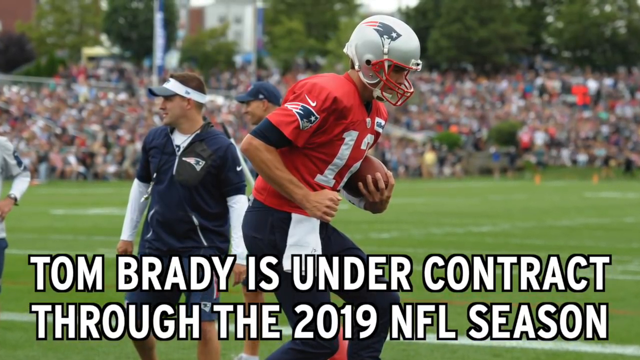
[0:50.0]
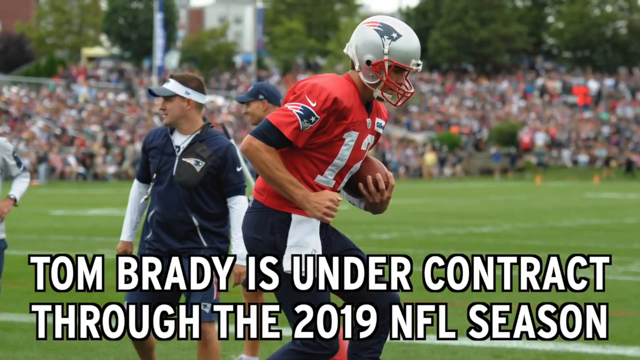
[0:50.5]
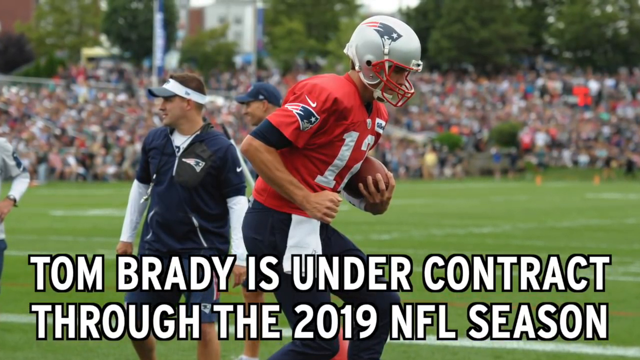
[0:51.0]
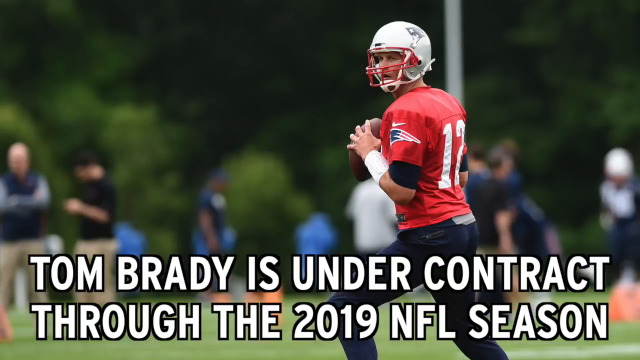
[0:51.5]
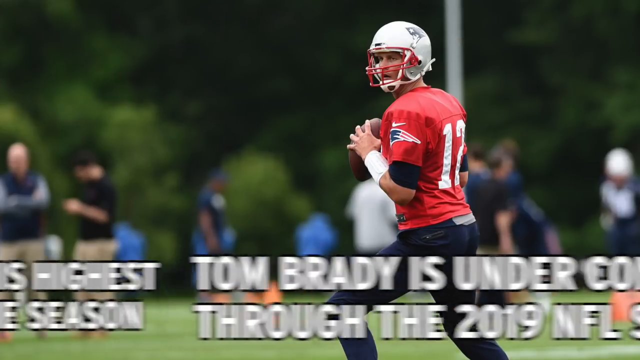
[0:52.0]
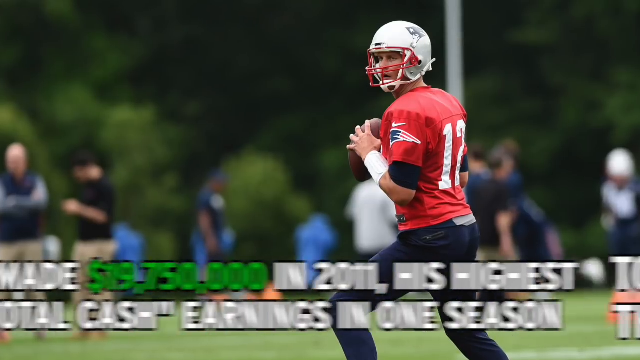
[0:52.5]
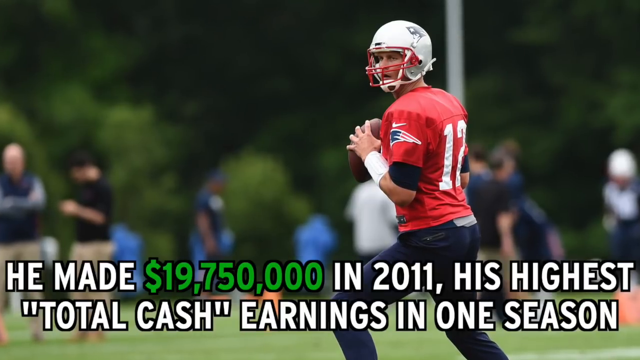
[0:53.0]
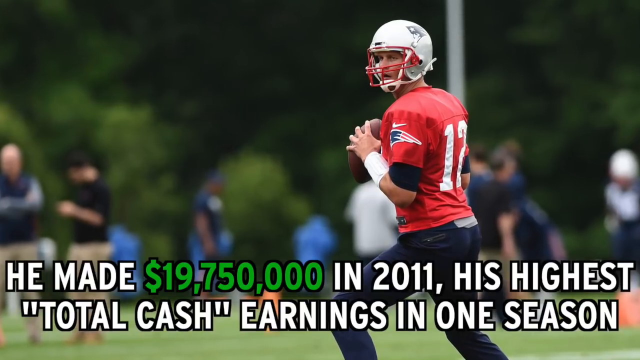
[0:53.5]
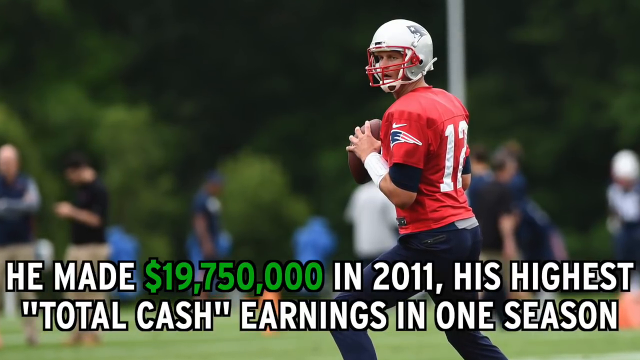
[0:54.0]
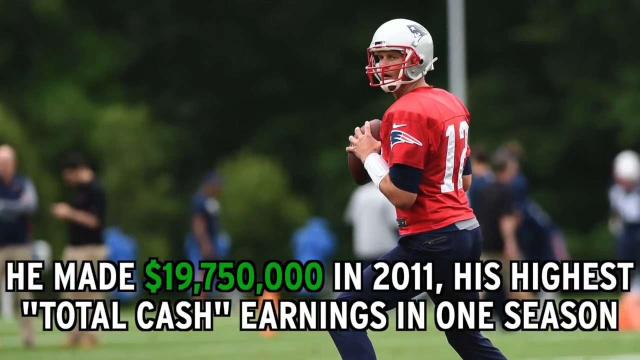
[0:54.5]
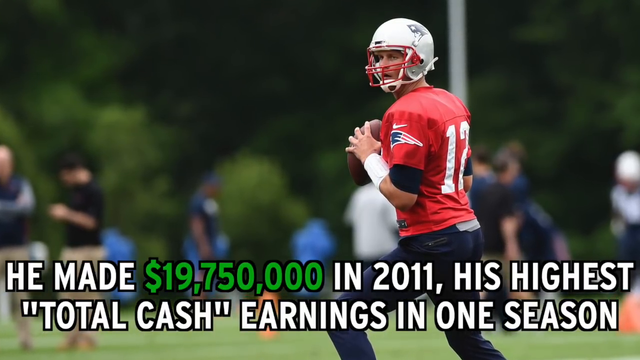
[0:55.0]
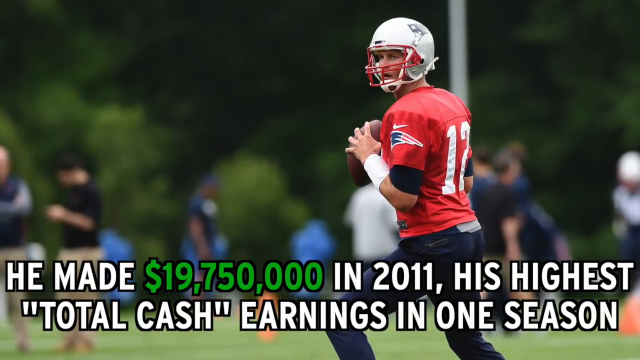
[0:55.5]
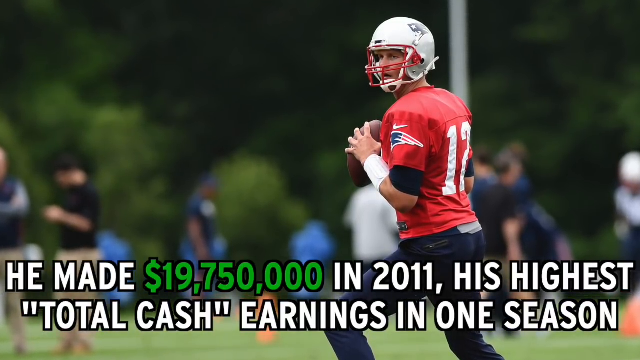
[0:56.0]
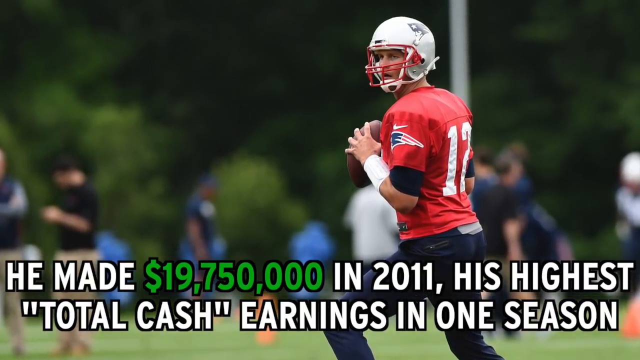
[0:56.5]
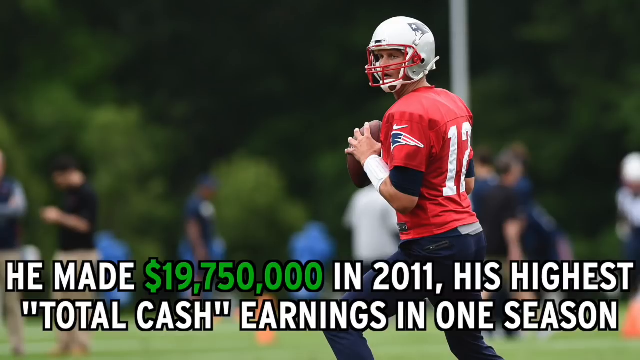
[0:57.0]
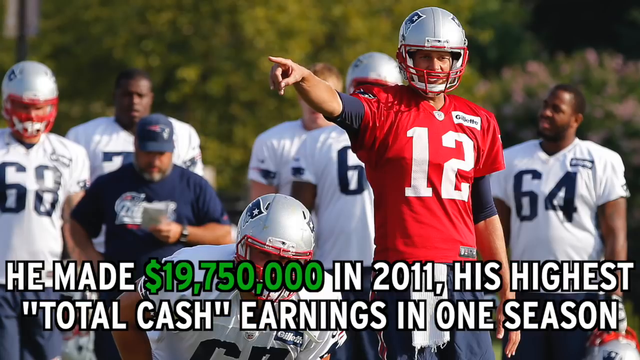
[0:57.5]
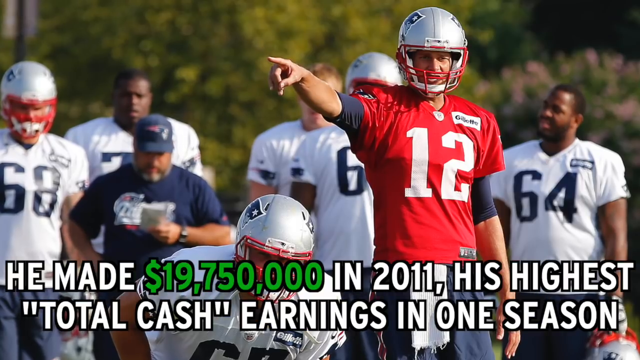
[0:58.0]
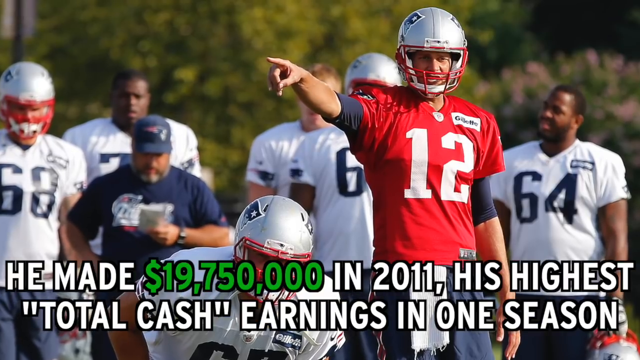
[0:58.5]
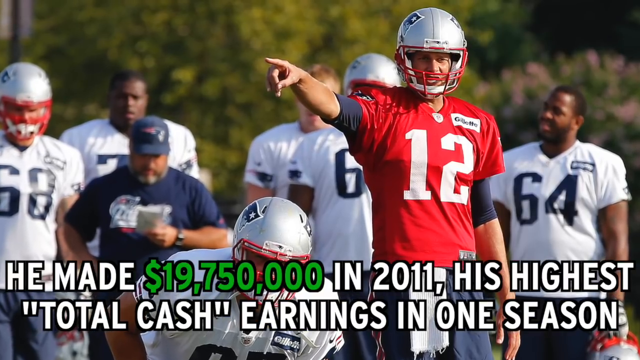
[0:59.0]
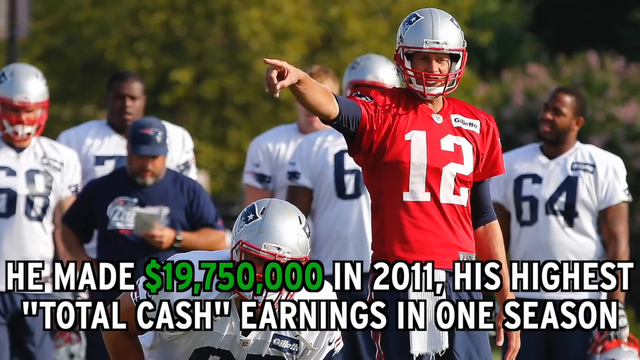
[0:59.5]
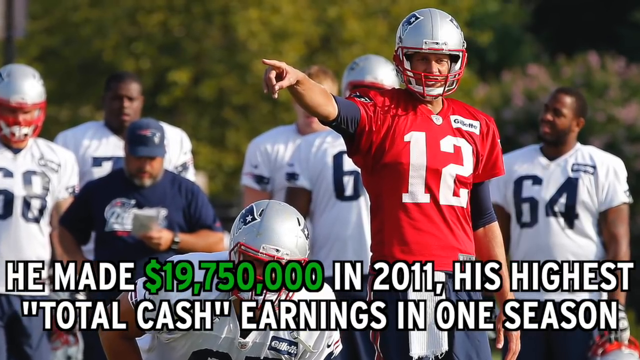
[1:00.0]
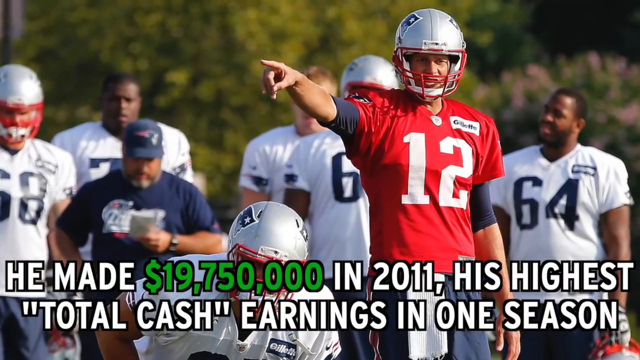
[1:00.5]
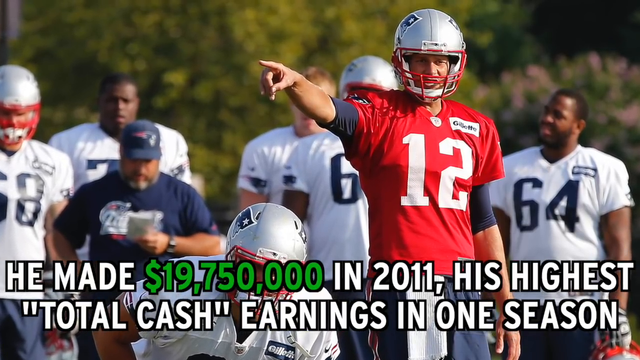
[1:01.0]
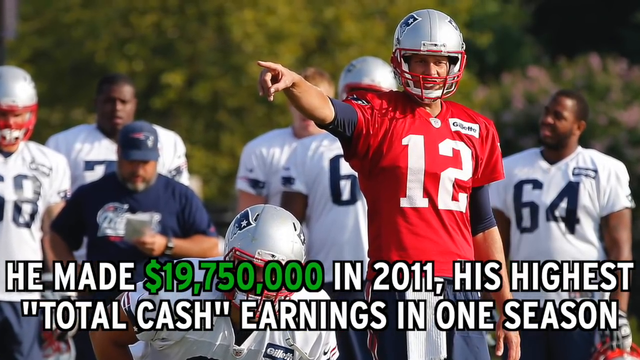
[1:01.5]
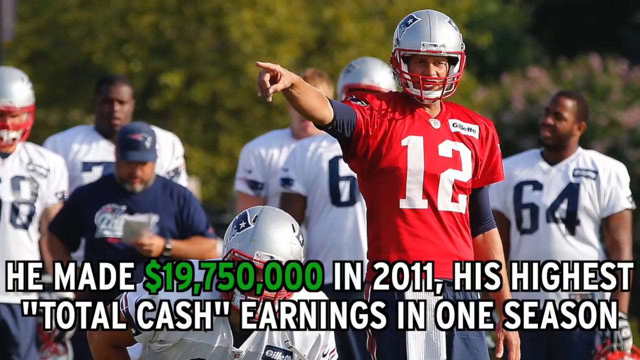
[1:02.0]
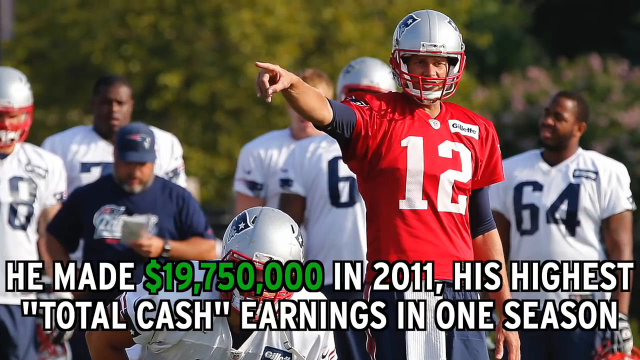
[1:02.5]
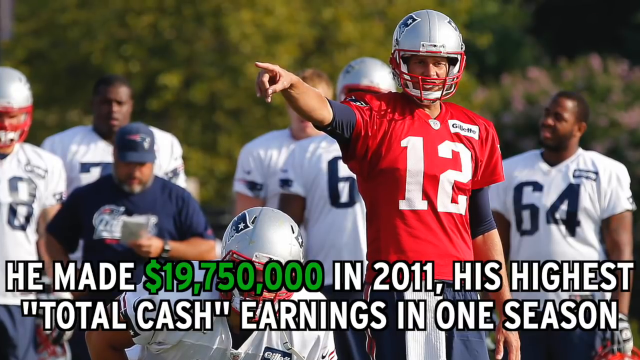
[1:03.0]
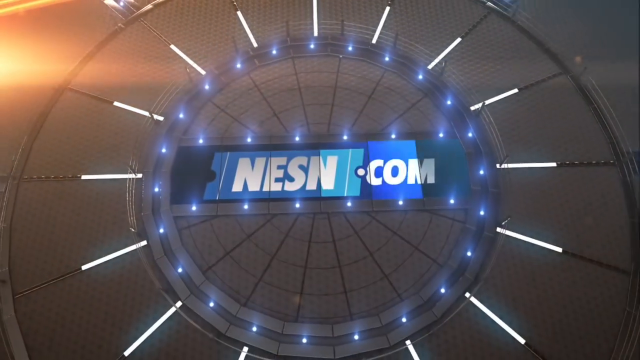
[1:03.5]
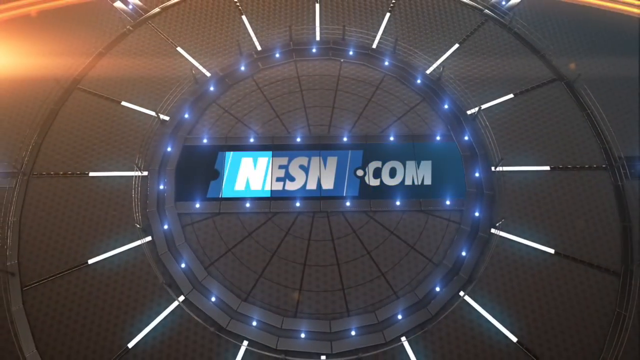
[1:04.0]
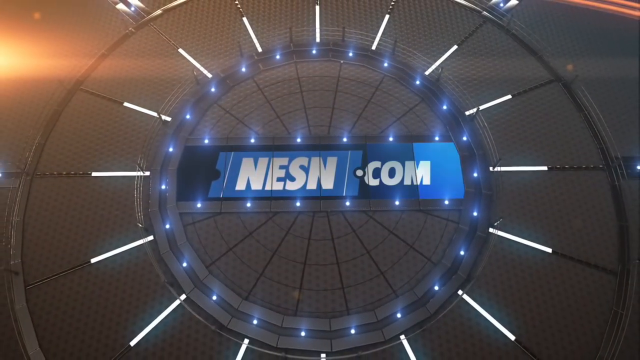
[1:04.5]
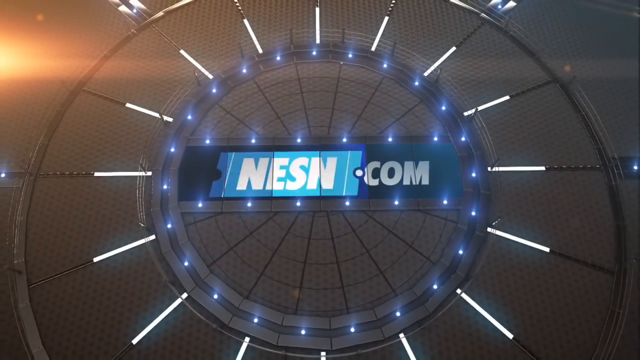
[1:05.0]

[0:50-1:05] The camera continues to zoom in slightly before the scene transitions. A white male with the number 12 on the front of his red jersey and the New England Patriots logo on the side of his silver helmet is seen on the right side of the screen, with many blurred people behind him. The text changes to read "He made $19,750,000 in 2011, his highest 'total cash' earnings in one season". The camera zooms in. The screen transitions, and number 12 stands to the right of the screen and points towards the camera. Behind him are a few other men wearing white and blue jerseys and a man wearing a blue baseball hat and a blue t-shirt, with many blurred trees behind them. The camera zooms in. The screen transitions, and the NESN.com logo appears and begins to turn, its tiles lighting up, and the video ends.